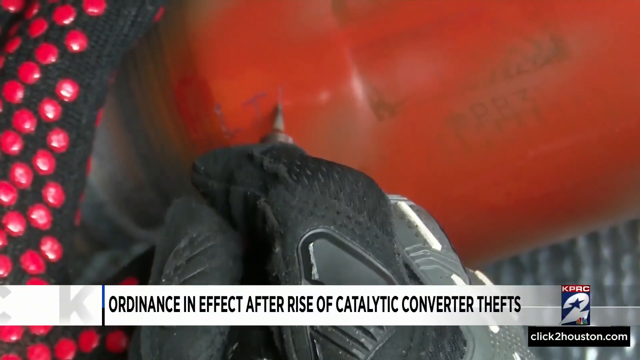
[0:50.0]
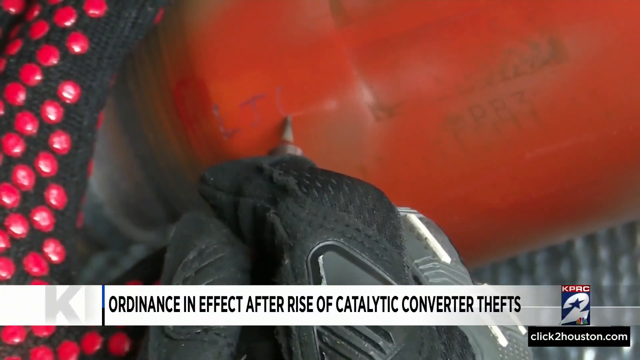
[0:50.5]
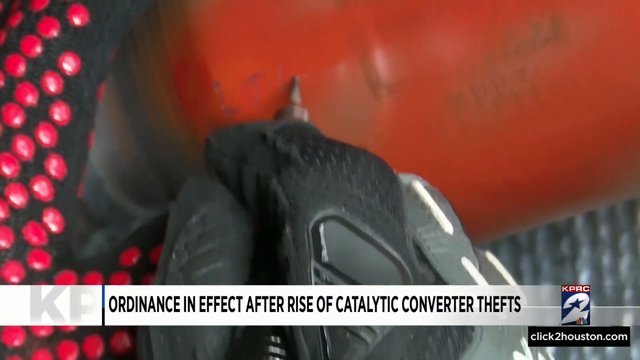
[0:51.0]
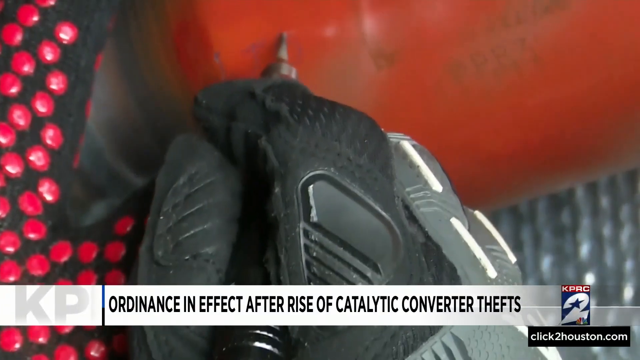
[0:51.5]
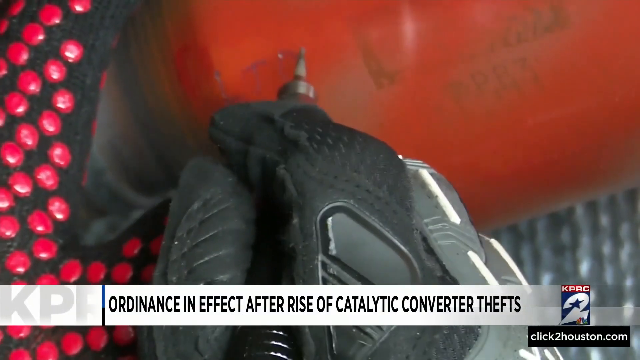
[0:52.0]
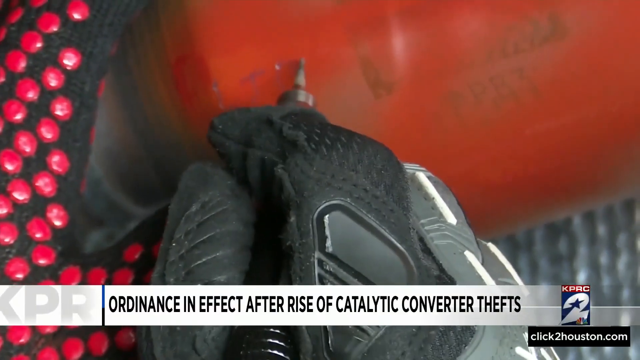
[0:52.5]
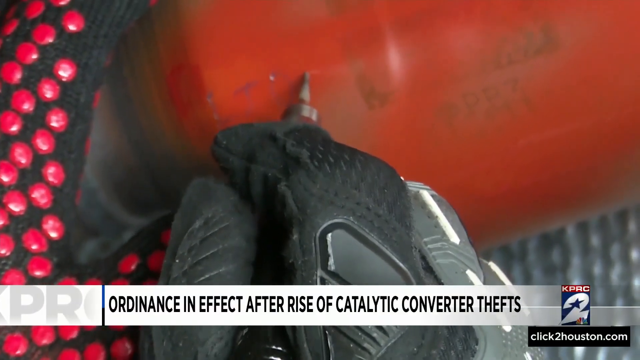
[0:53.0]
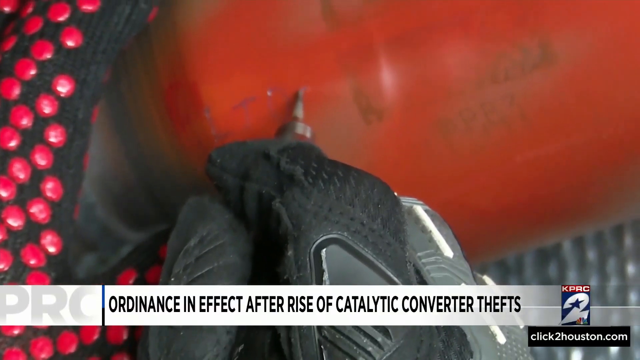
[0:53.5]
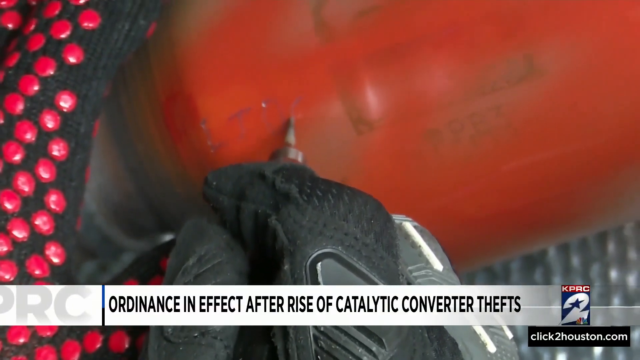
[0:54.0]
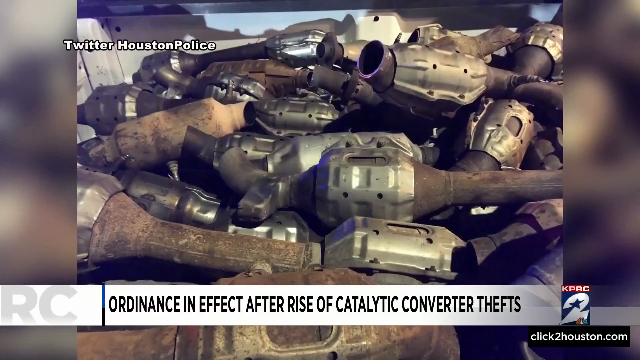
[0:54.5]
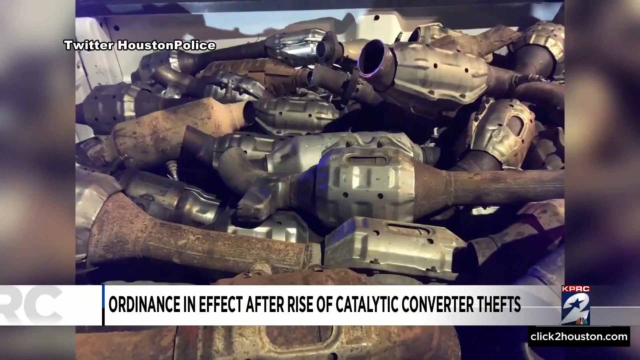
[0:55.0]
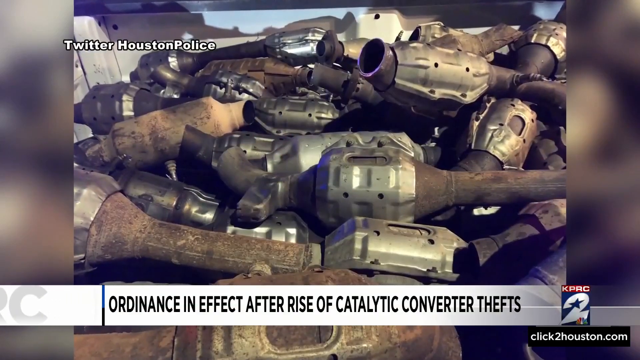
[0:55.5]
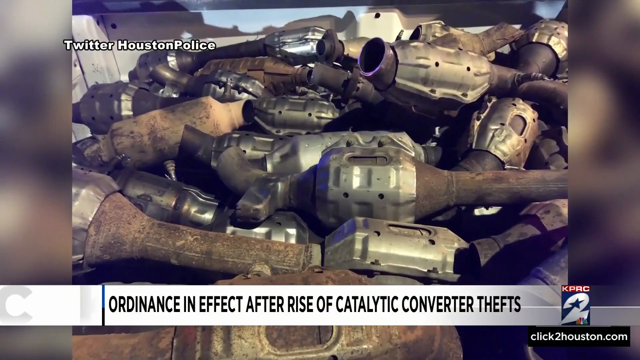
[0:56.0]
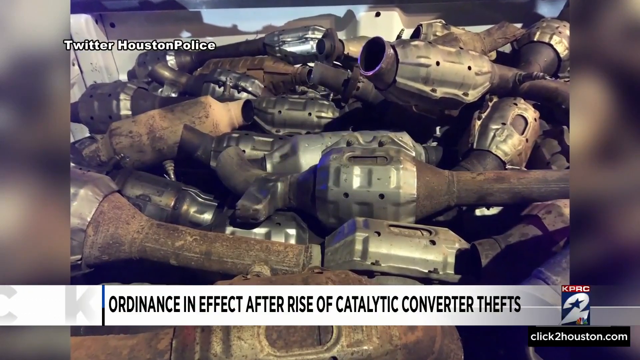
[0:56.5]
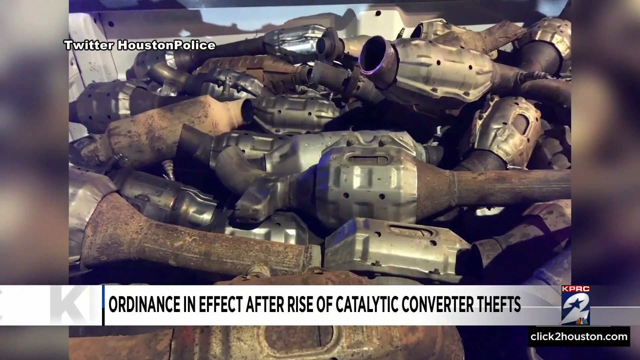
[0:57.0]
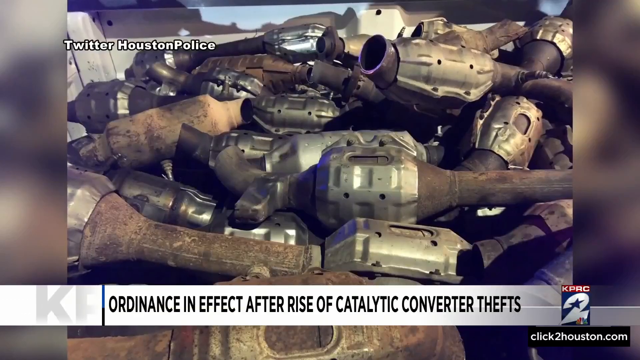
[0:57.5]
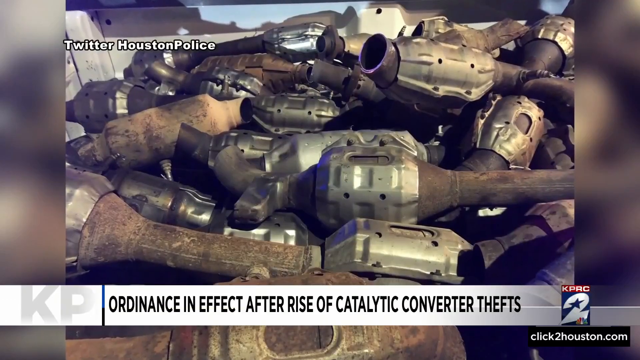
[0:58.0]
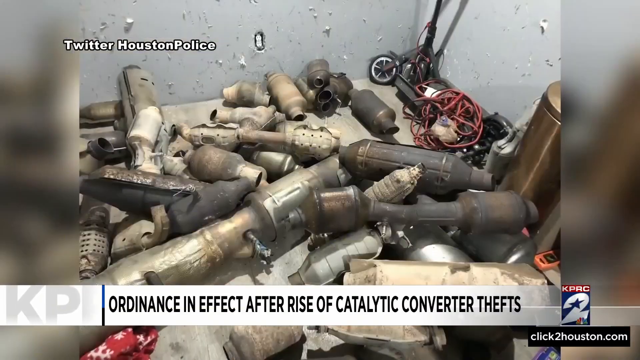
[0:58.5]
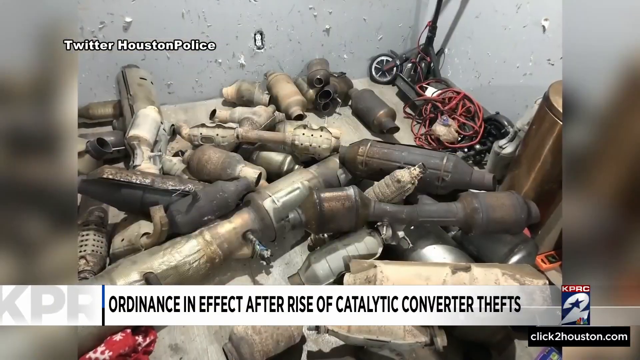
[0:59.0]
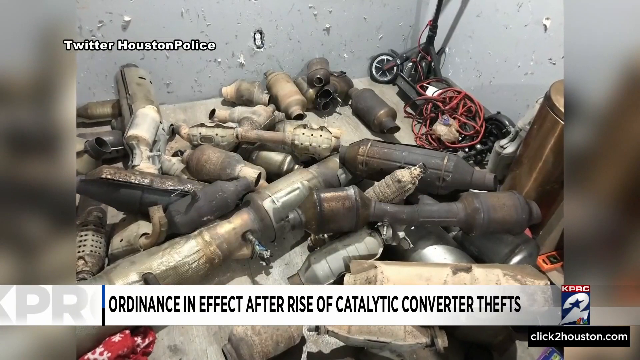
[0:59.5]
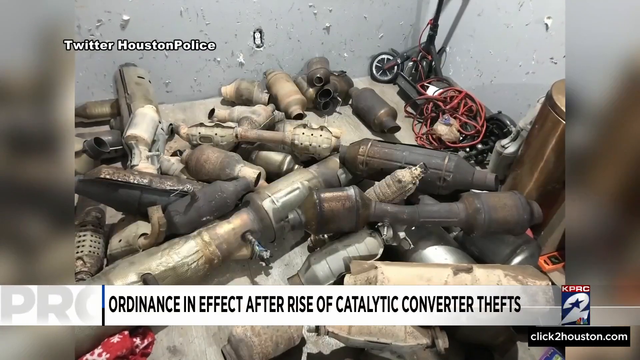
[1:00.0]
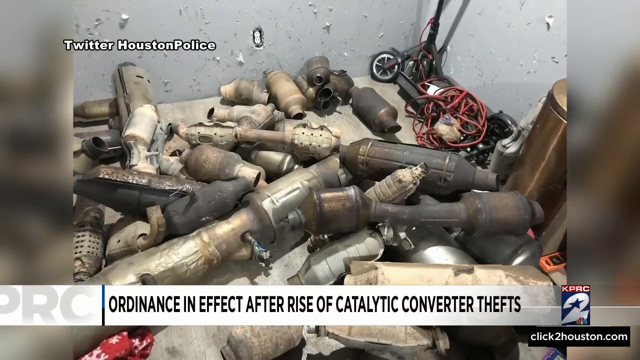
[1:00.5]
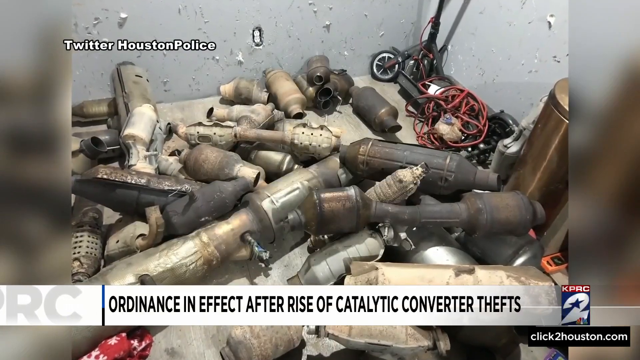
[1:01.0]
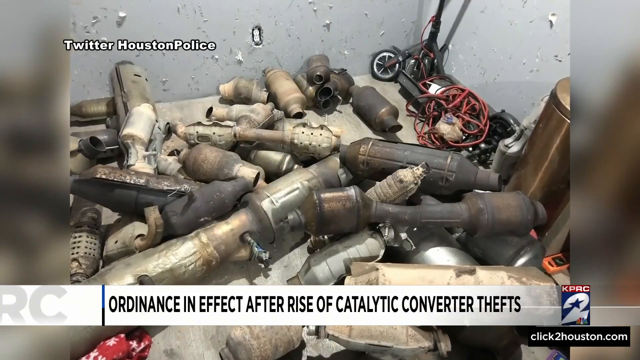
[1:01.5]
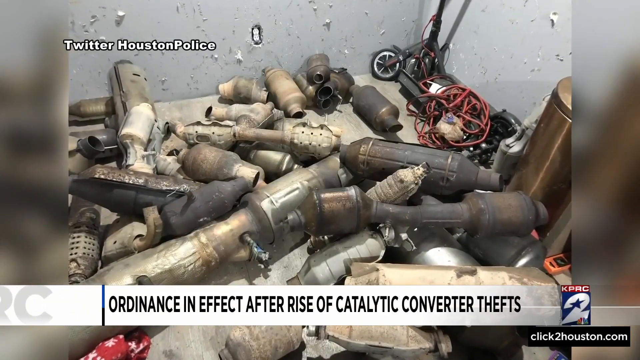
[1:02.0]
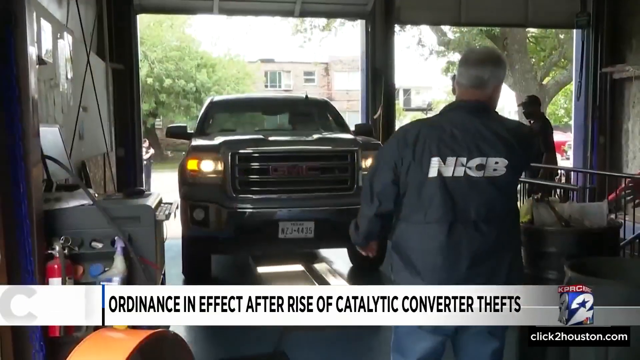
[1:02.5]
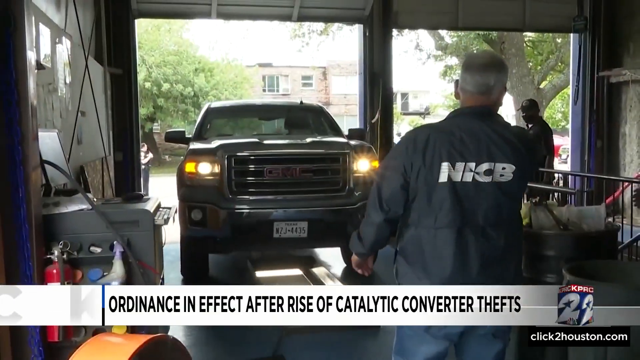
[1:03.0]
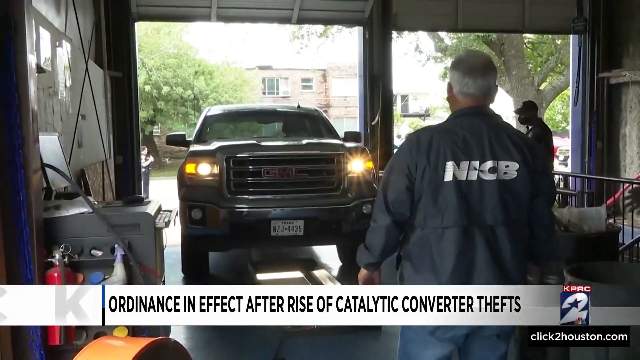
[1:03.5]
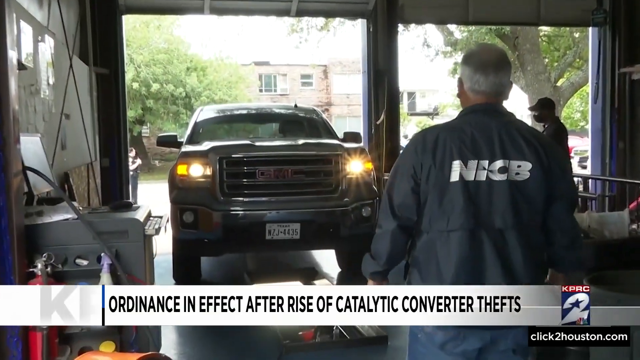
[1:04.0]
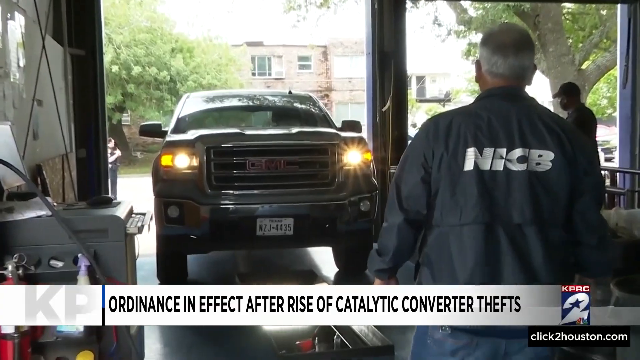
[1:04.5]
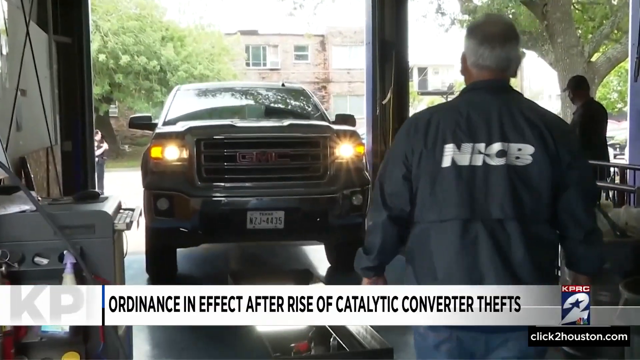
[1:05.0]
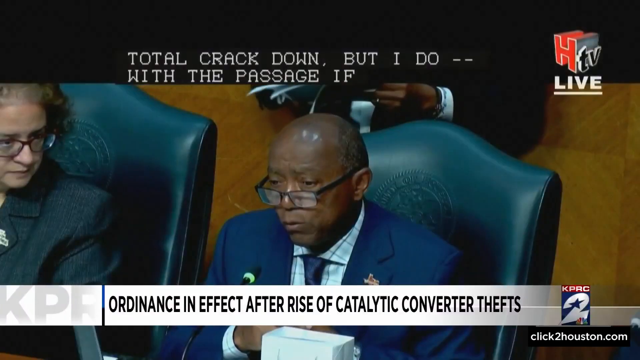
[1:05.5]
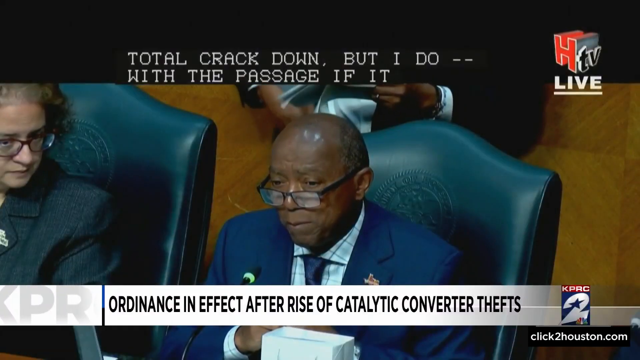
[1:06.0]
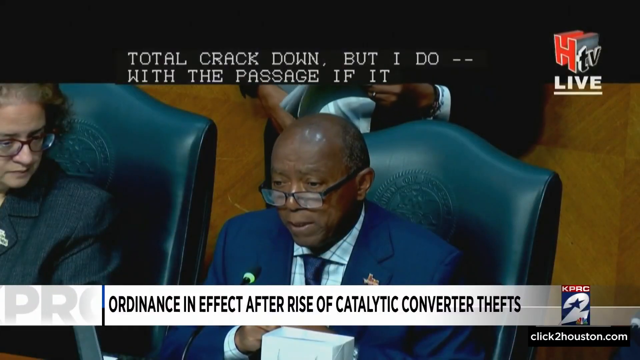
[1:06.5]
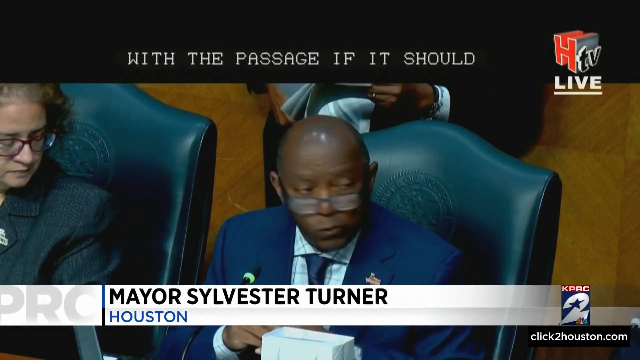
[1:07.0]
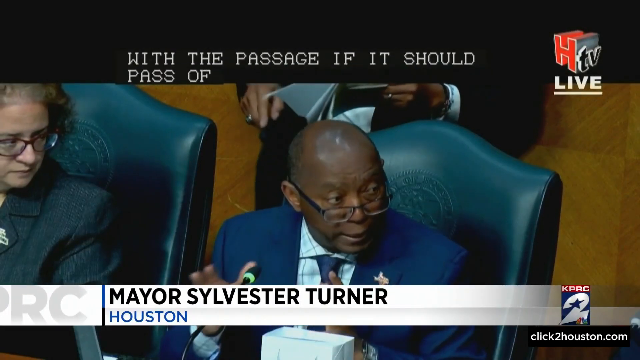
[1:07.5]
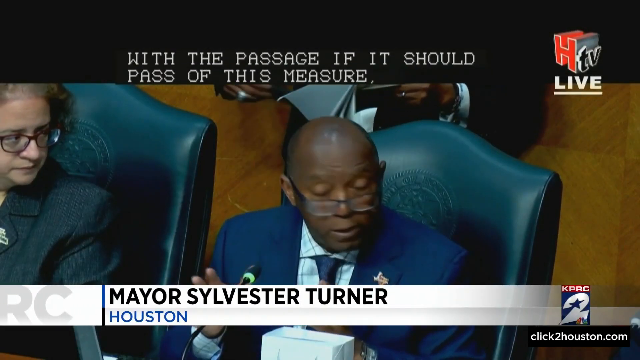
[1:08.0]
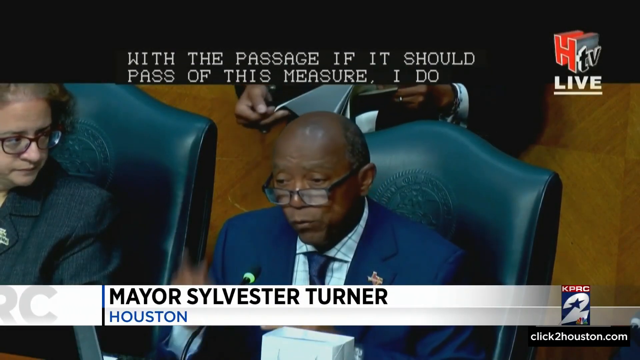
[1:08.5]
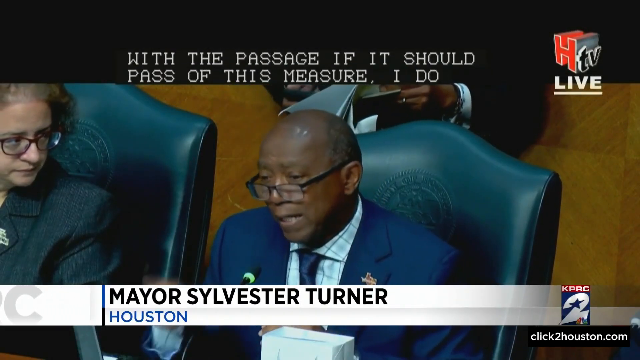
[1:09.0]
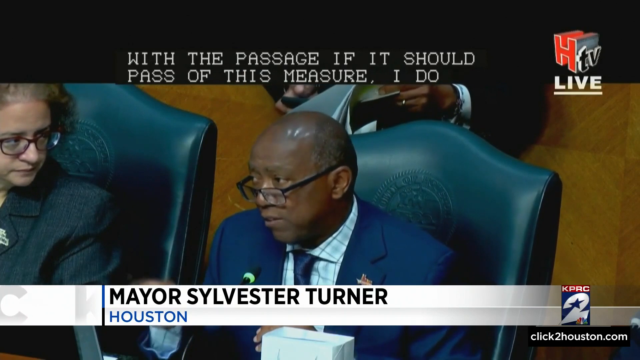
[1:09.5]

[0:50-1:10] Someone wearing a really thick glove etches over the catalytic converter, apparently marking it to brand it. Another picture shows catalytic converters stacked up, maybe about 20 in the pile, with "Twitter, Houston Police" on the top left, apparently indicating it was posted on the Houston Police Department's Twitter. The bottom banner reads "Ordinance in effect after rise of catalytic converter thefts" along with "KPRC 2". Footage shows someone in a GMC truck backing out of a garage while a worker wearing a jacket with "NICB" on the back stands in front of the truck. Then text reads "Houston Mayor Sylvester Turner", with closed captioning text along the top, and he appears to be speaking at what looks like a government meeting.